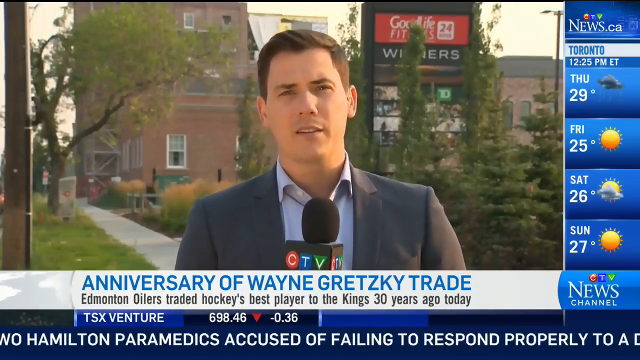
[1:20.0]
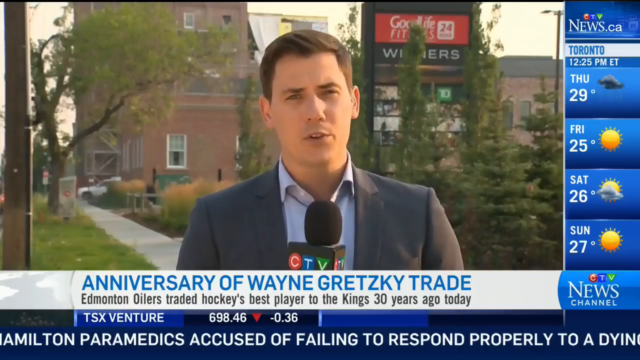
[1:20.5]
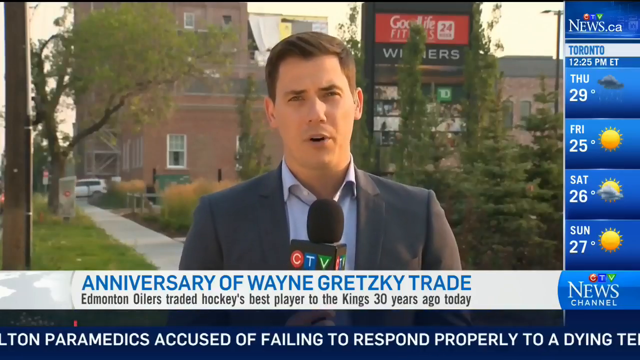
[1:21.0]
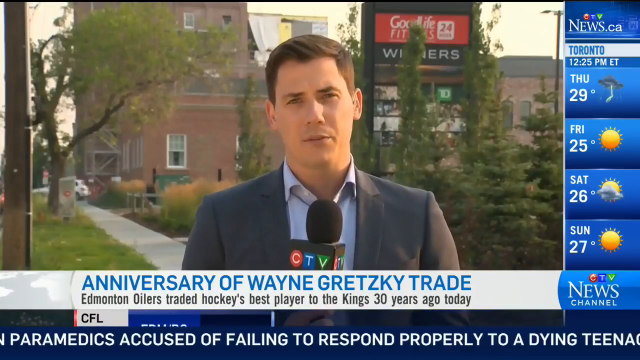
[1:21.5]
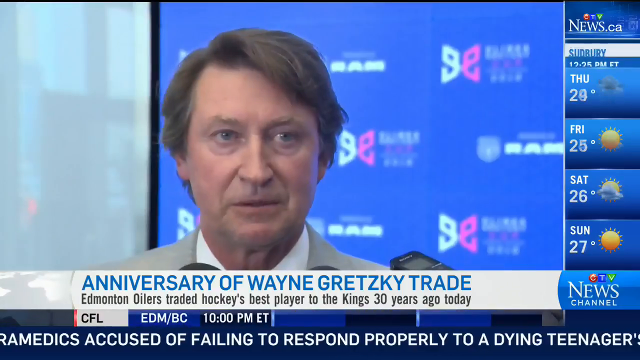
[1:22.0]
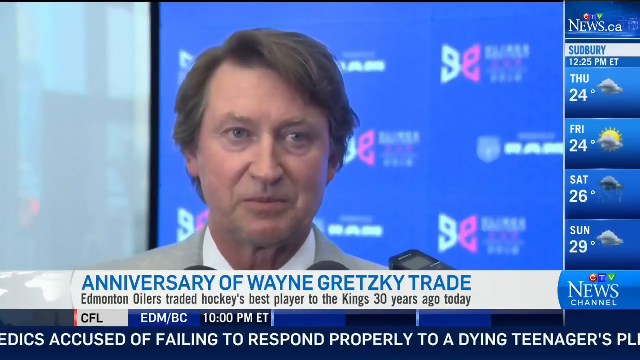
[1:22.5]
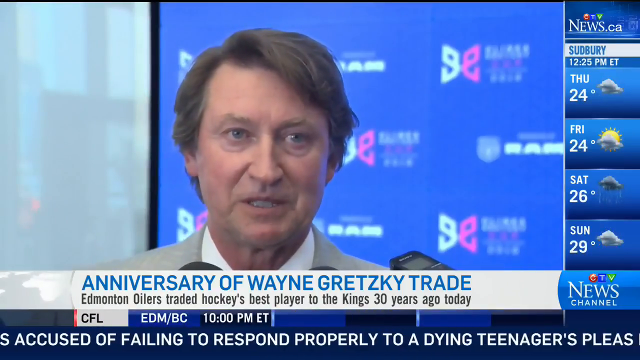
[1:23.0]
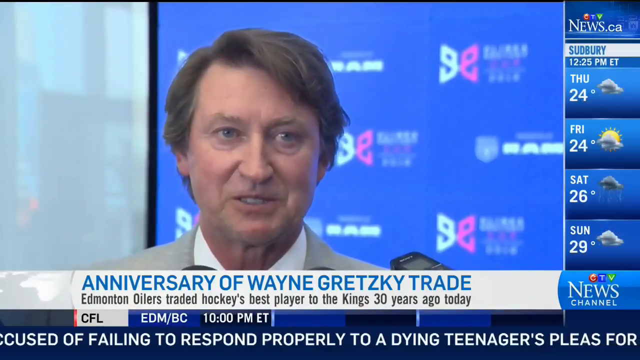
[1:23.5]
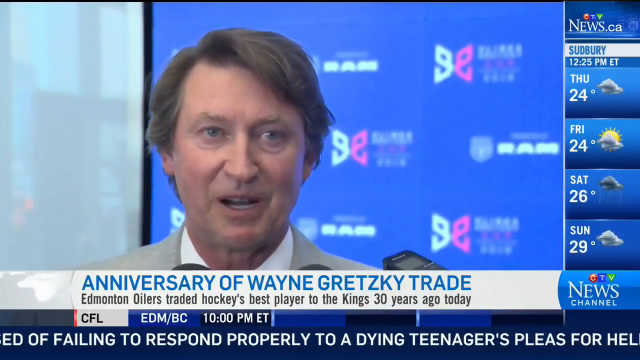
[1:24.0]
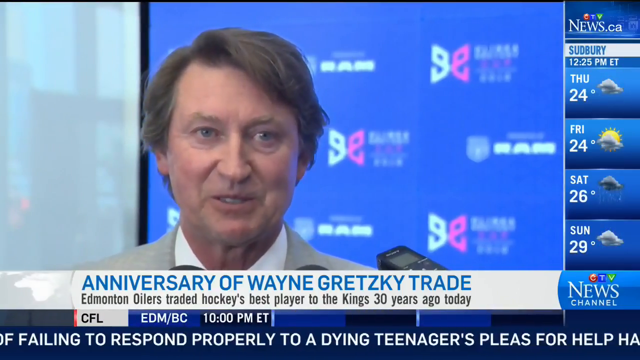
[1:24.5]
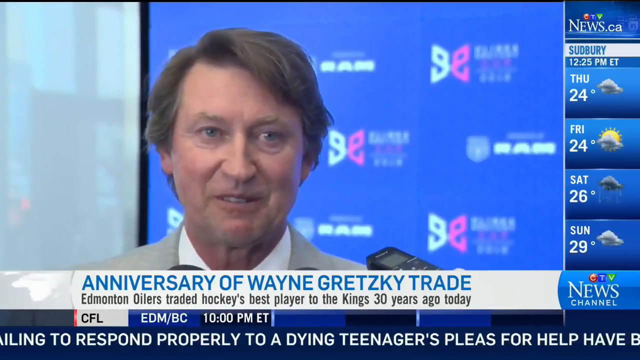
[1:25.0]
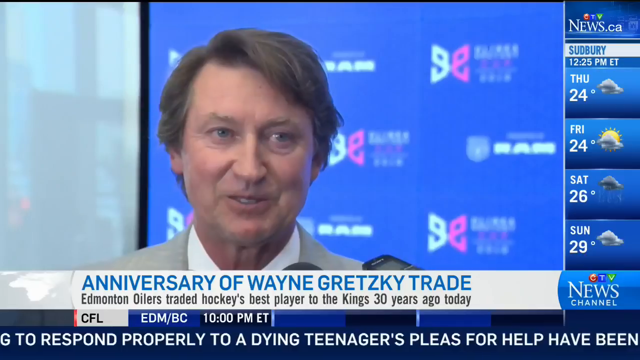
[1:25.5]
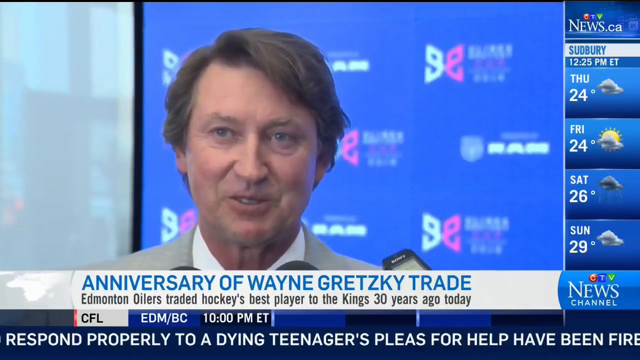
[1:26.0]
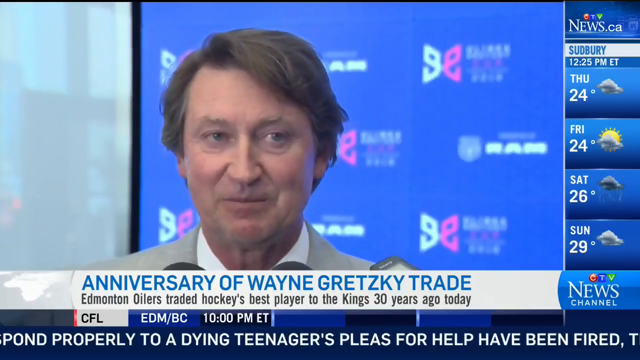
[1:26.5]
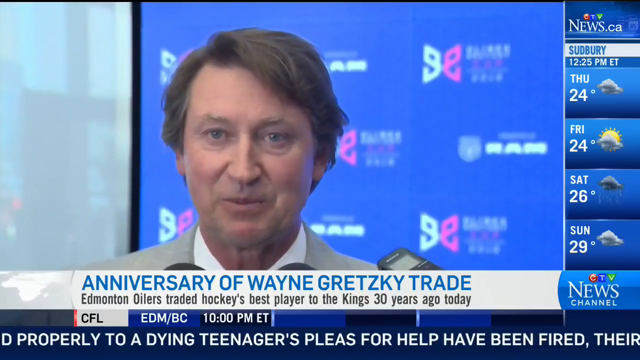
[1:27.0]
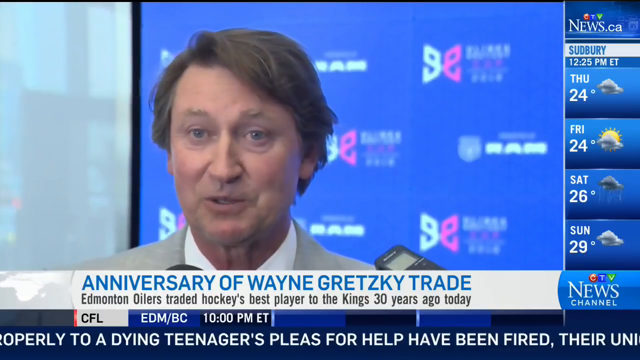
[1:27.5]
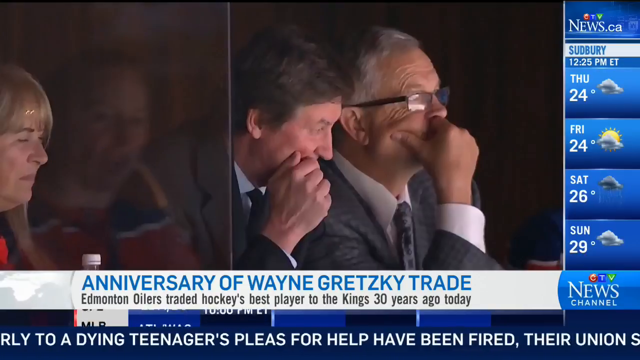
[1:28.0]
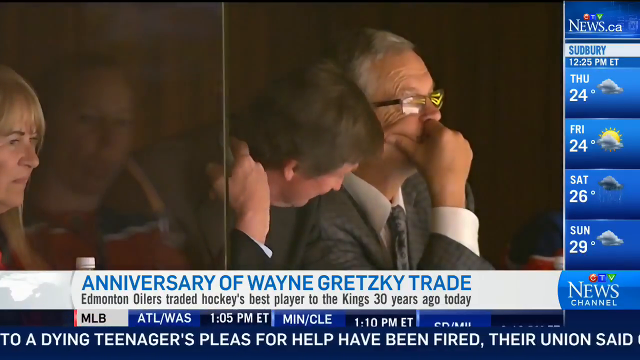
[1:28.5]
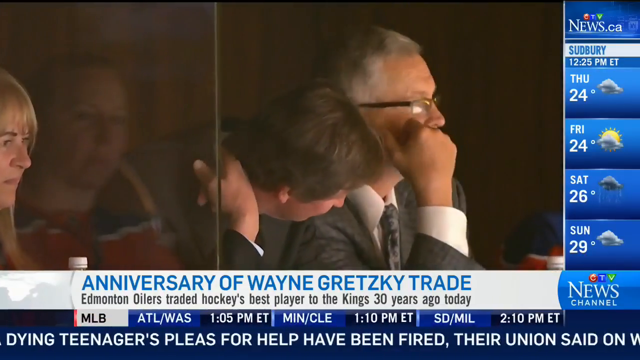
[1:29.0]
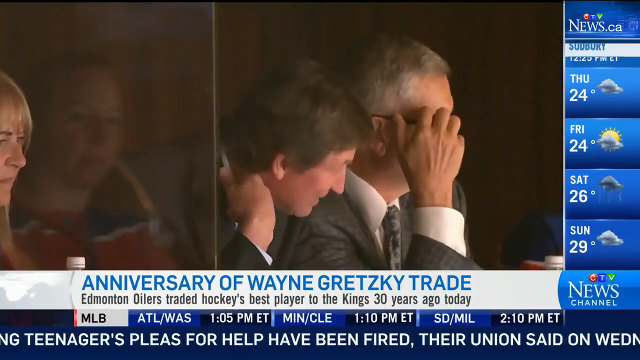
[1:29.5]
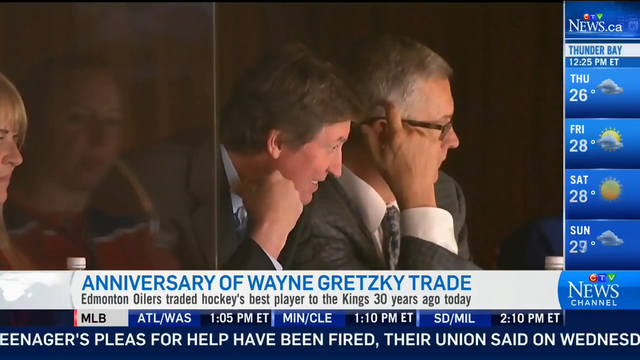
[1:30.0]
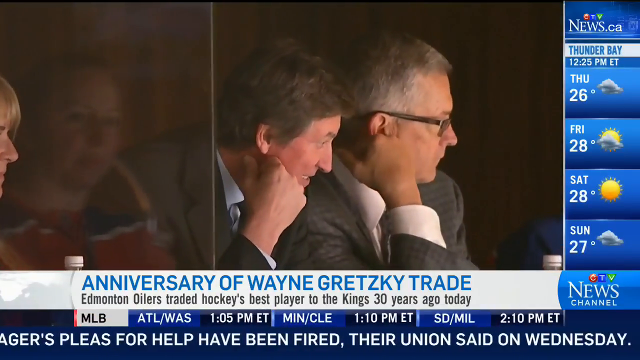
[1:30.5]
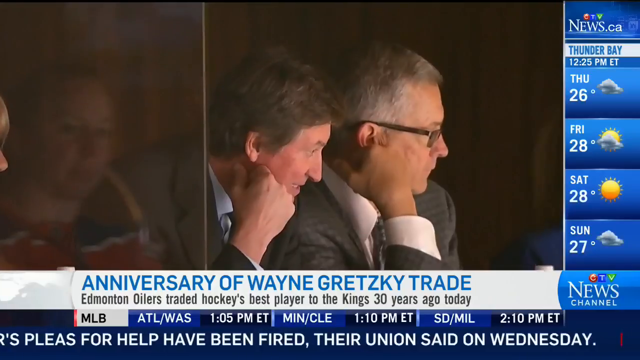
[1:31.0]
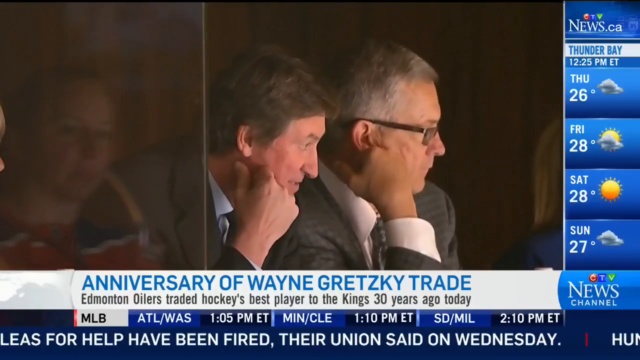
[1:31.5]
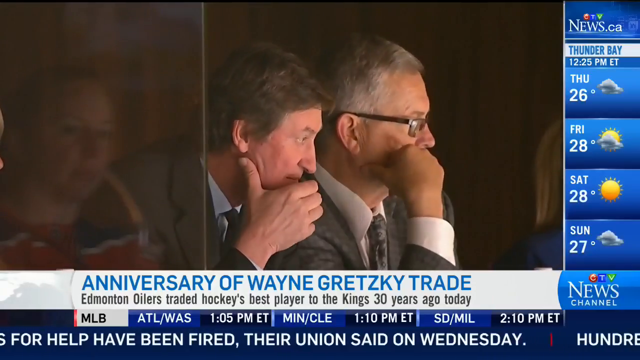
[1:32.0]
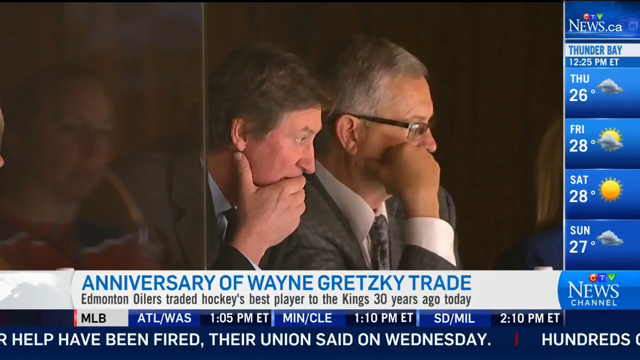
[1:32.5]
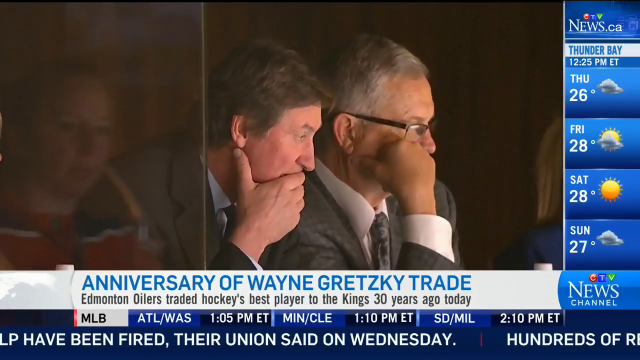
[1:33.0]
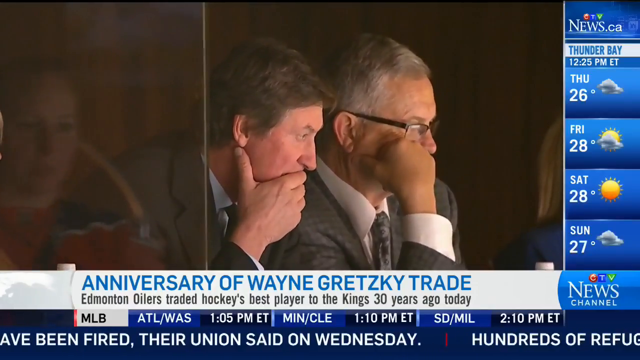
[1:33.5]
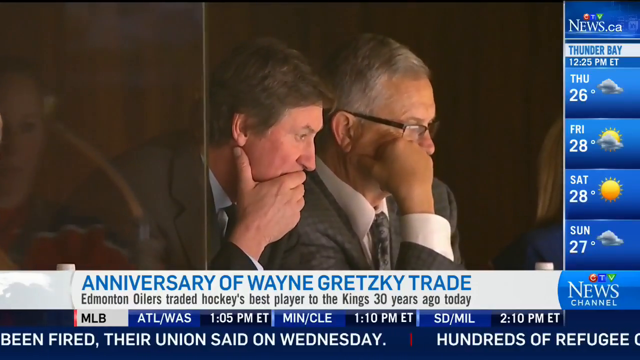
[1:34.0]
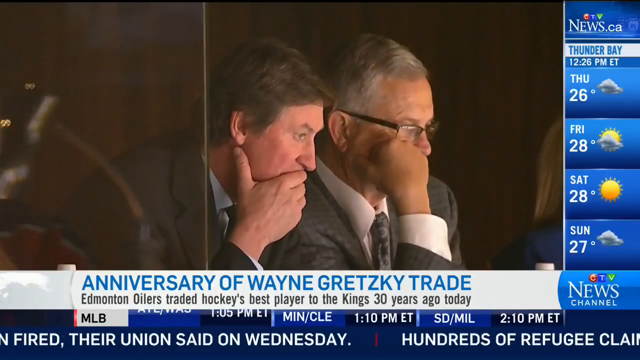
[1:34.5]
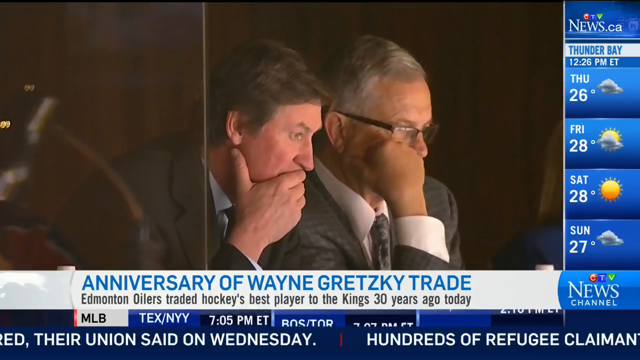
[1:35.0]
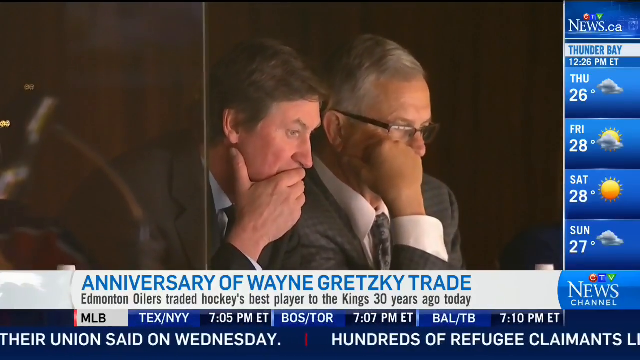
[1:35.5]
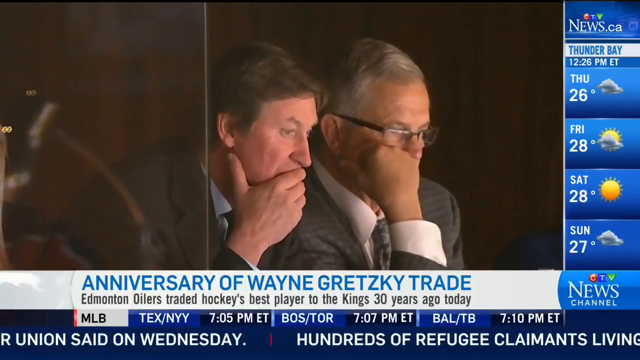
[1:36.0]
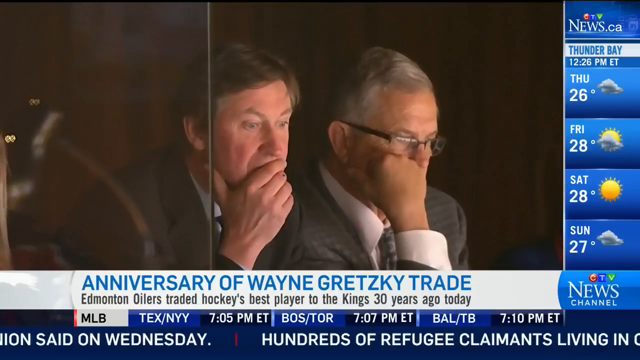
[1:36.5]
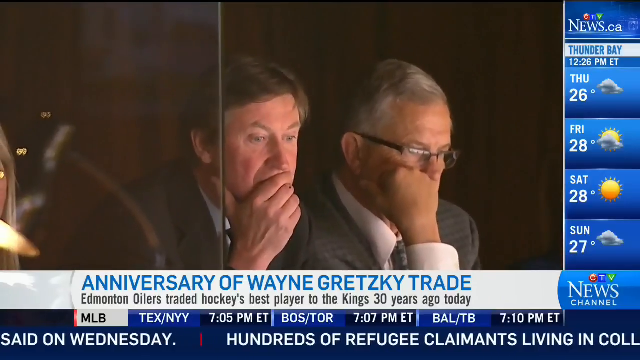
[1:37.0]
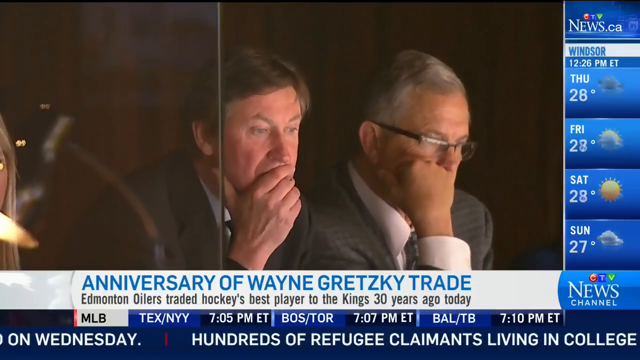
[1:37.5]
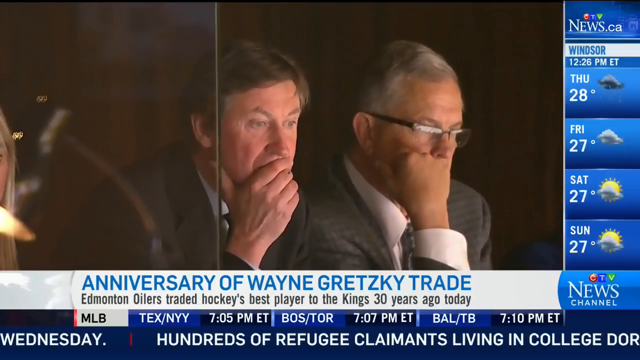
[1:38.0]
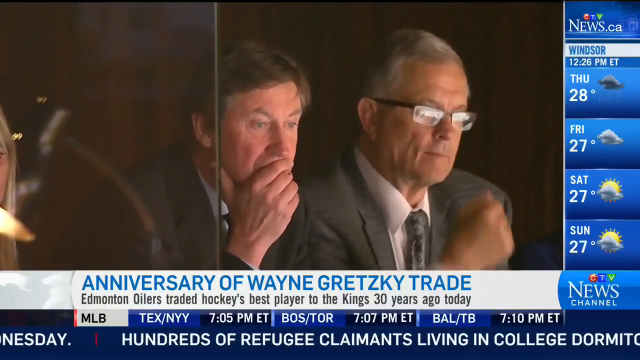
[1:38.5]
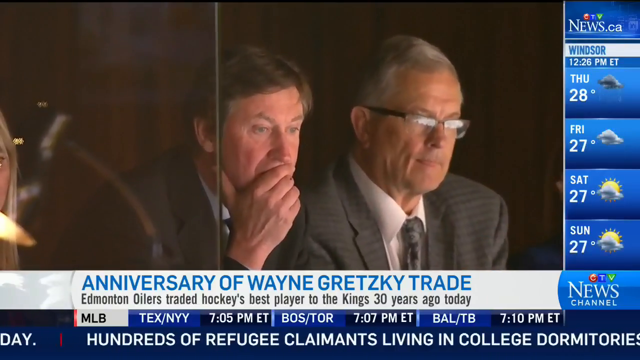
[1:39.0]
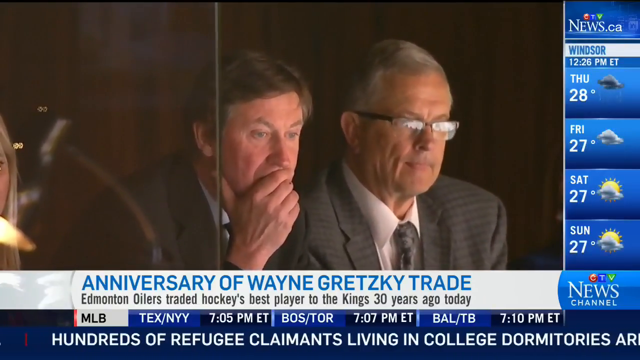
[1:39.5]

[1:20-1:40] A white SUV drives around the side of a brick building in the distance. The video then shows him in modern times, probably in his 60s, with his hair parted to his left side. He wears a beige suit and answers questions, smiling big and seeming to enjoy himself. A few different mics are in front of him but are hard to see because the ticker at the bottom covers them. To the right, someone holds up what looks like some kind of recorder. The view then shows a booth where, to the right, another gentleman is apparently watching the game with his hand on his face, and the guy to his right does the same. To the left there is a glass divider, apparently separating the suites. He keeps his hands over his face for a moment while looking to the right.